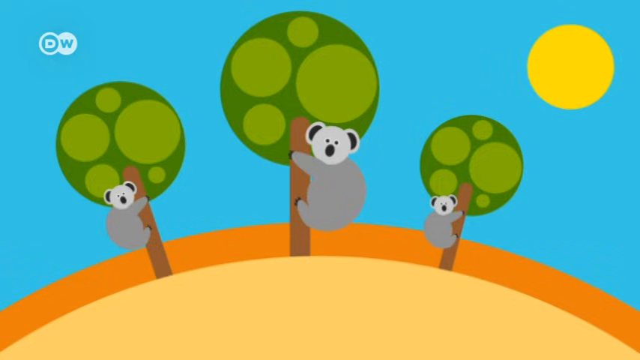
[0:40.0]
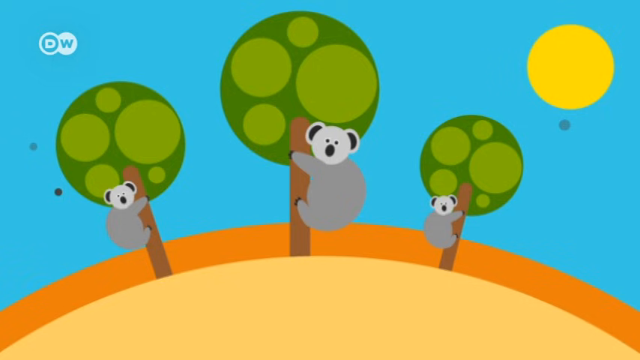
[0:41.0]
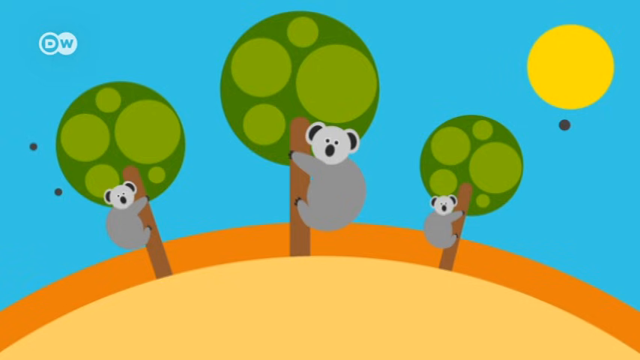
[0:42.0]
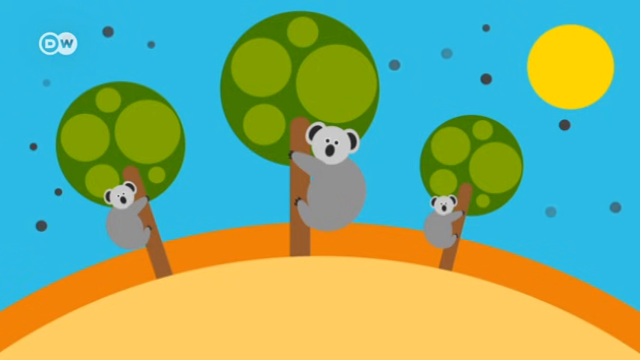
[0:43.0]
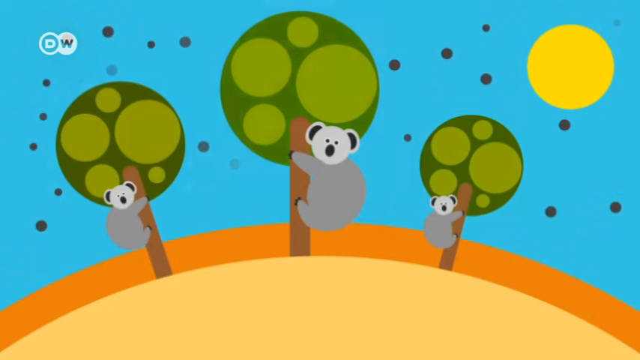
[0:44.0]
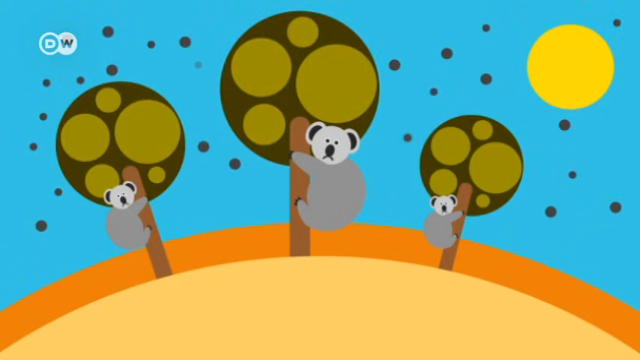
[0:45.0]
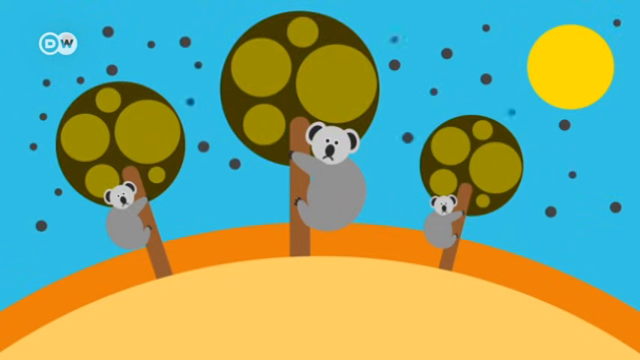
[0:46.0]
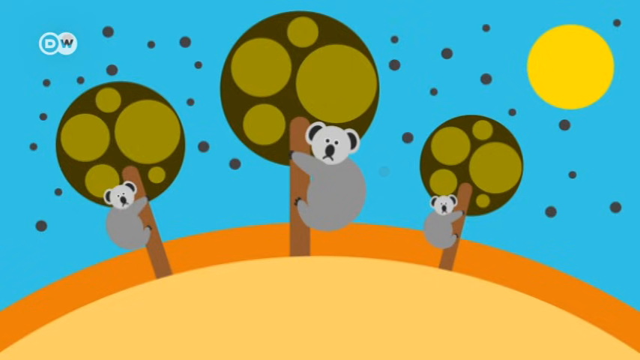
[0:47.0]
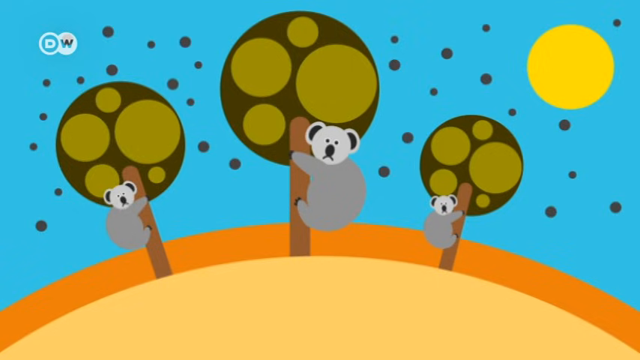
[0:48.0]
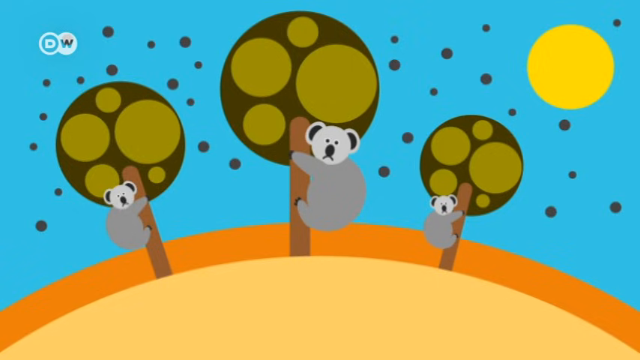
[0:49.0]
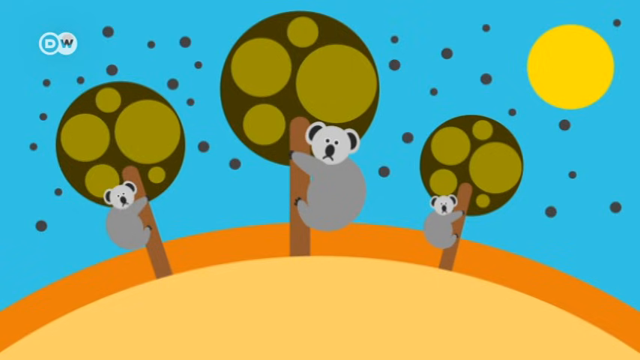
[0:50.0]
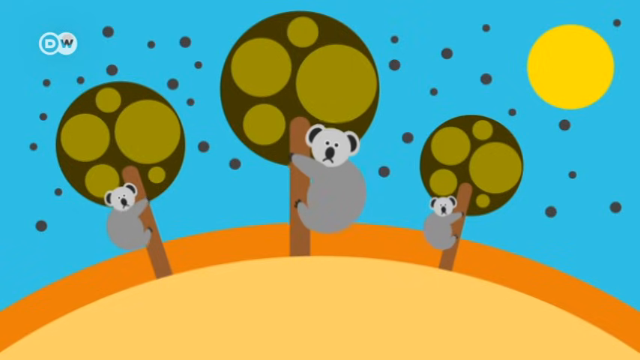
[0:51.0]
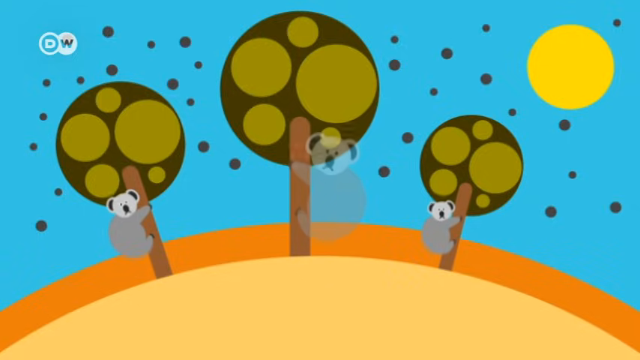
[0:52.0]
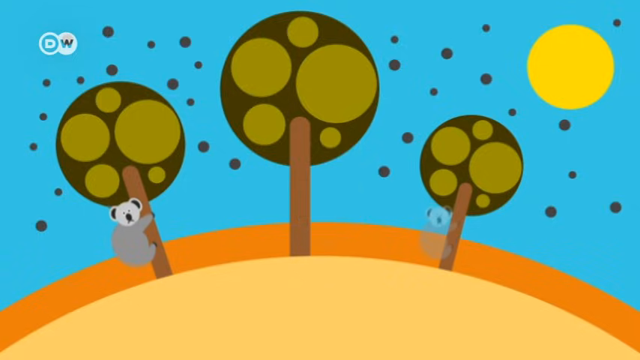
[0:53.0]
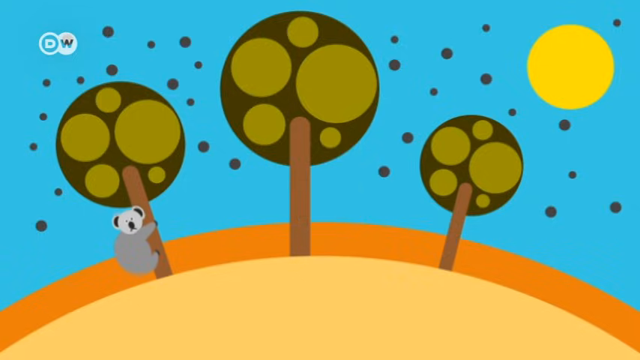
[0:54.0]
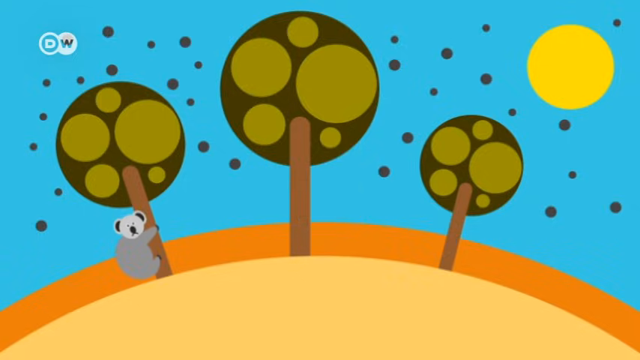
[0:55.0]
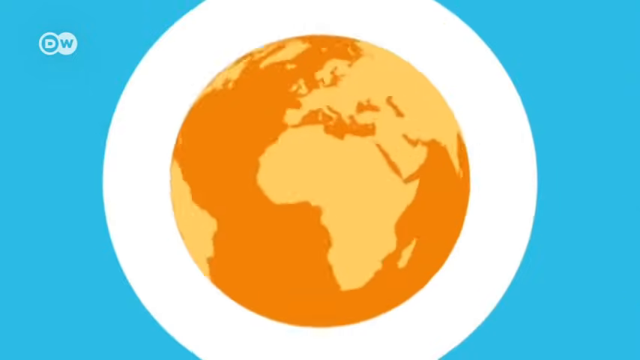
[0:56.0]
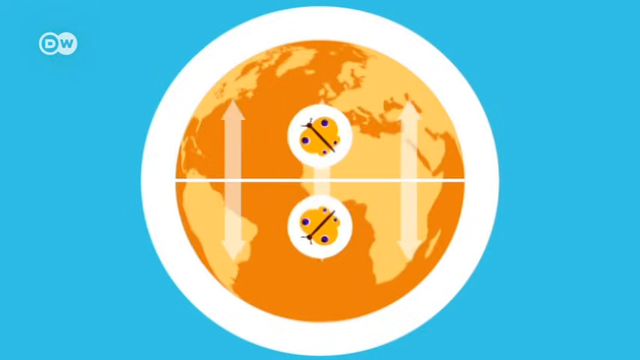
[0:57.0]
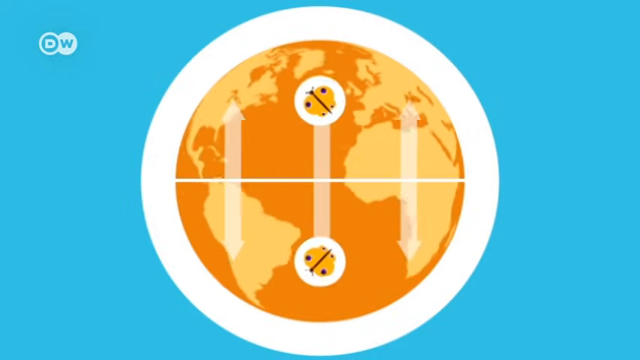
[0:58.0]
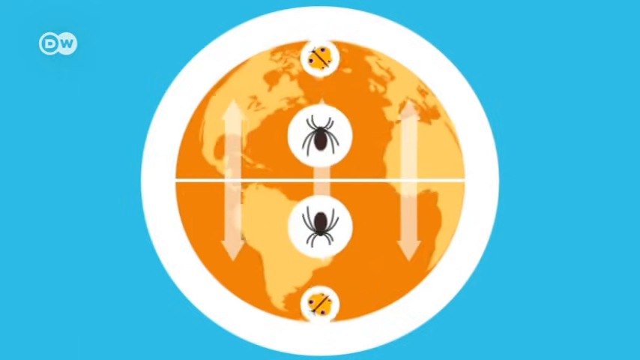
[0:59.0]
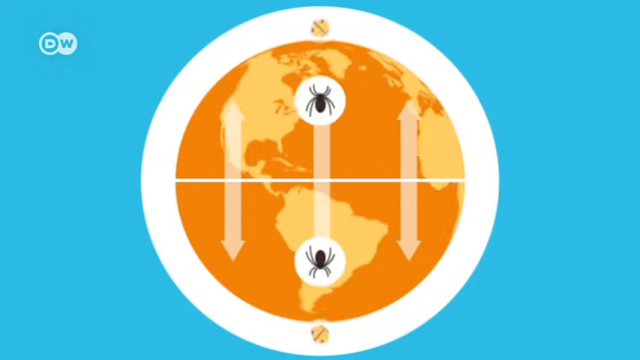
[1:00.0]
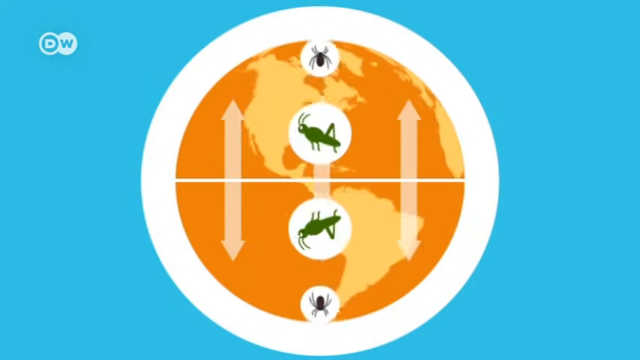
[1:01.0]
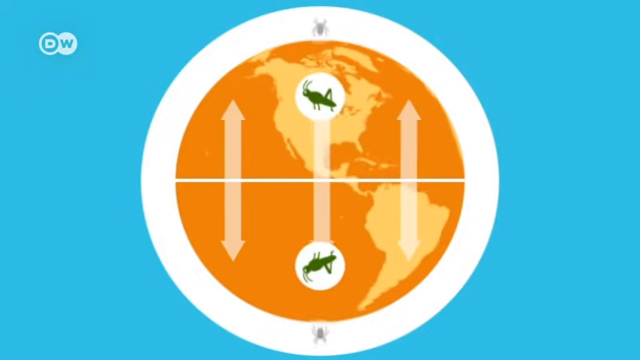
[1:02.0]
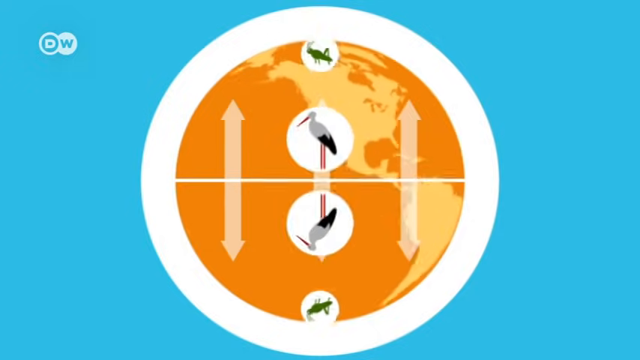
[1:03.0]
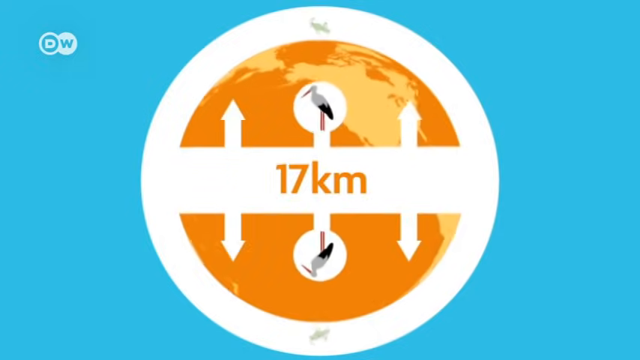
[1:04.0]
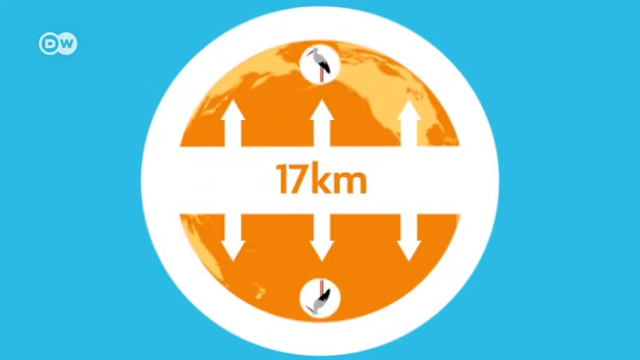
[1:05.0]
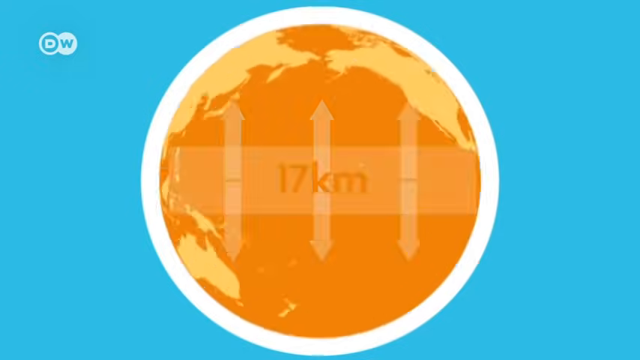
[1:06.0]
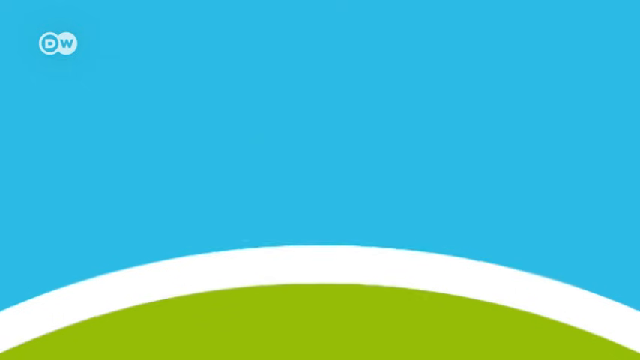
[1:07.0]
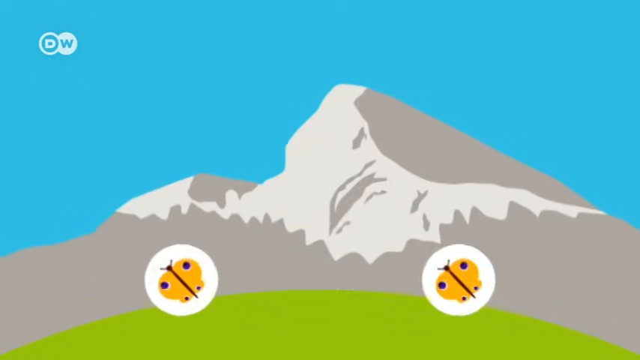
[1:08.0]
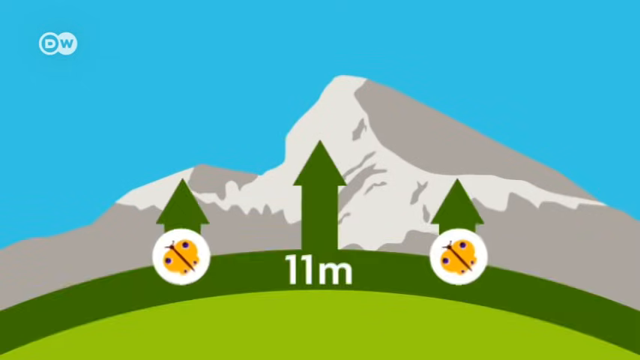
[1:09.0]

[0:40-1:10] Three koala bears climb three trees under a high sun in what looks like a desert. Black dots suddenly appear in the sky, and the green trees turn brown. The koala bear starts to look very sad; the scene perhaps indicates pollution in the air and trees that are no longer lush and green, leaving the koalas without food. One by one, the koala bears fall from the trees and disappear. The earth then spins, and the whole earth comes into view with a white line running through the middle and two arrows, one on the left and one on the right. Two butterflies in the middle are connected by a white line. The two butterflies move towards the north and south poles, while a spider appears in the middle and also moves towards the north and south poles, as do the birds and the insects. The earth spins while the animals and insects move from the middle towards the north or south pole. Next, the words "17km" appear in the middle of the earth. The earth then disappears, and a grassland with a snowy mountain in the back appears, along with two butterfly symbols.